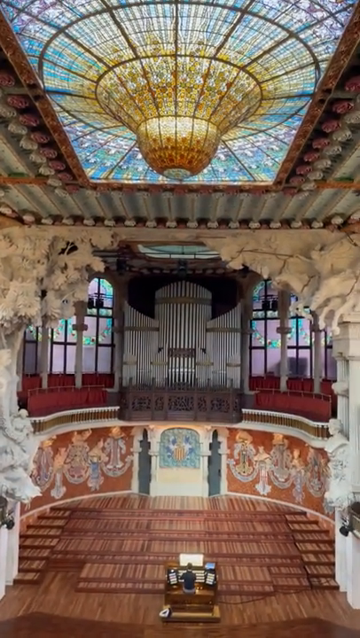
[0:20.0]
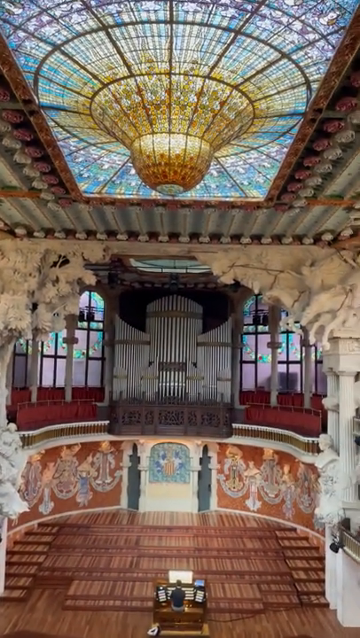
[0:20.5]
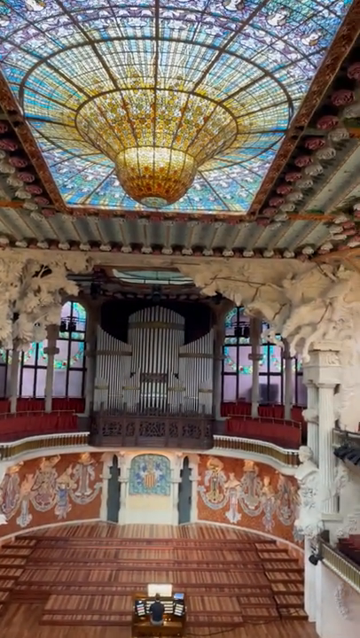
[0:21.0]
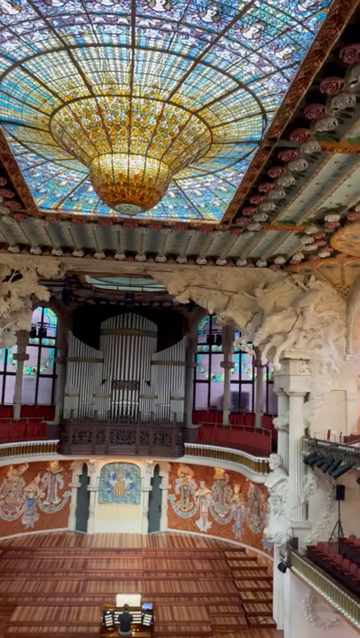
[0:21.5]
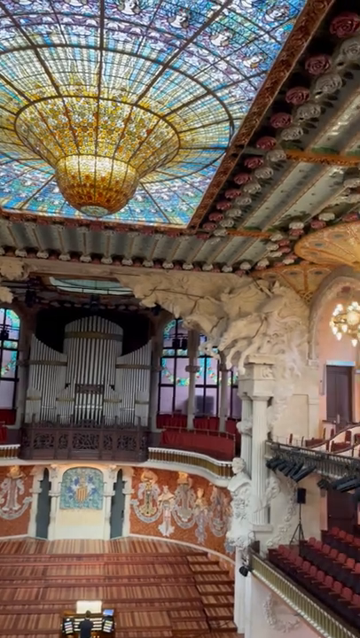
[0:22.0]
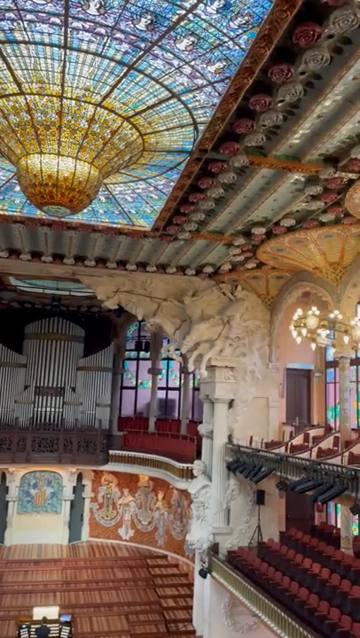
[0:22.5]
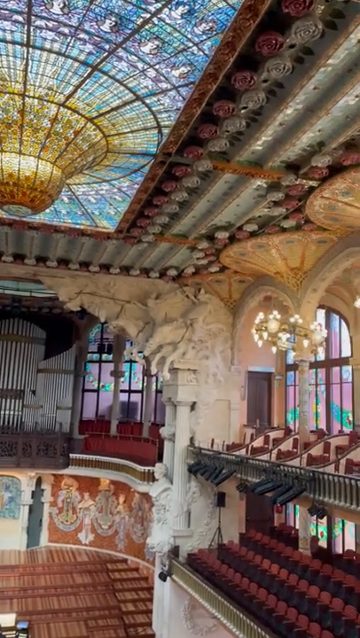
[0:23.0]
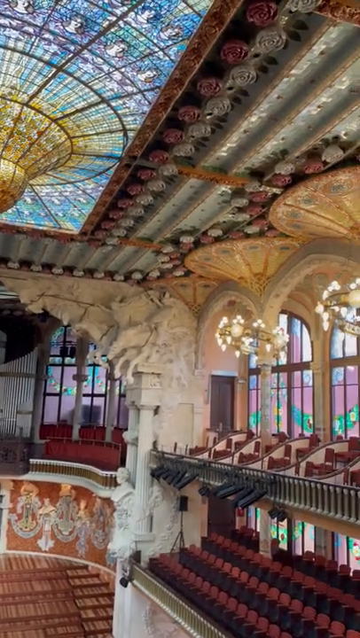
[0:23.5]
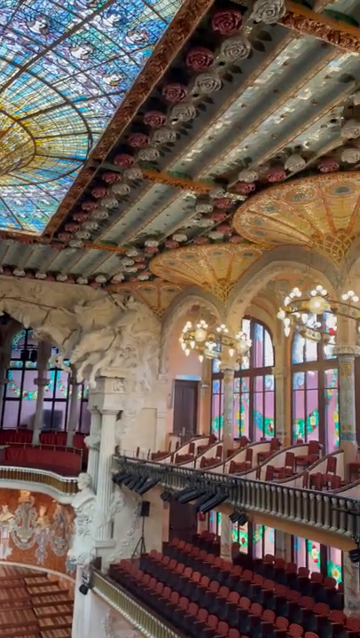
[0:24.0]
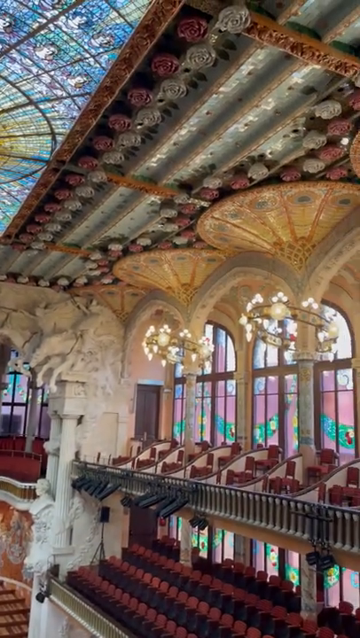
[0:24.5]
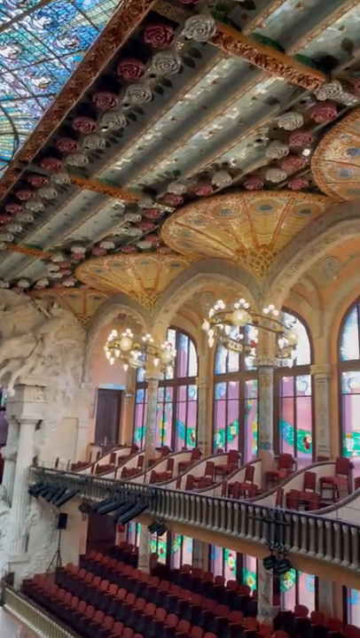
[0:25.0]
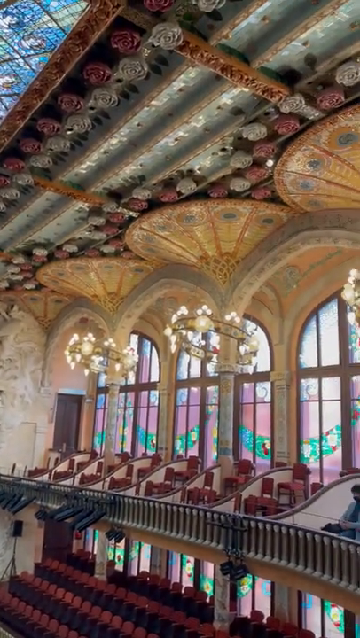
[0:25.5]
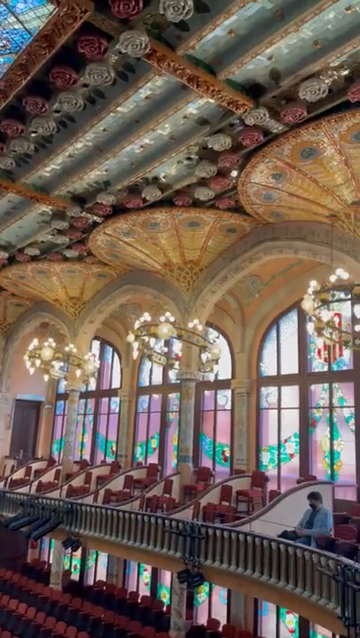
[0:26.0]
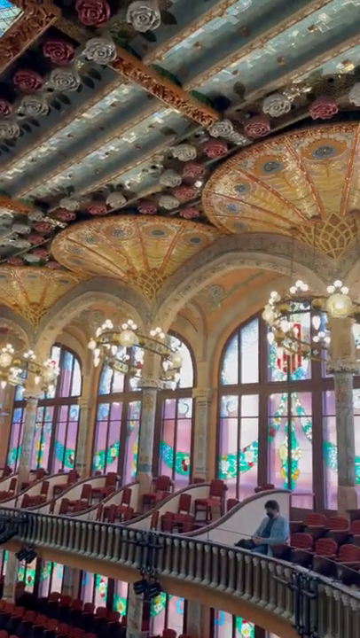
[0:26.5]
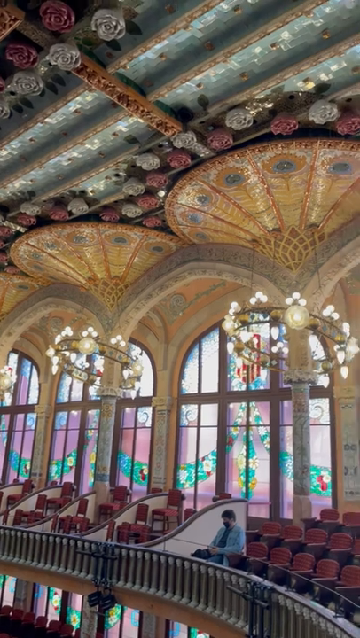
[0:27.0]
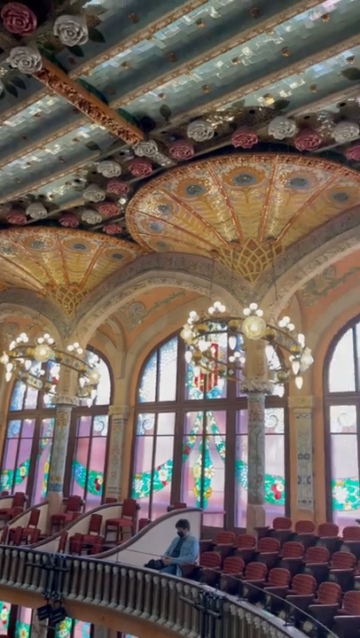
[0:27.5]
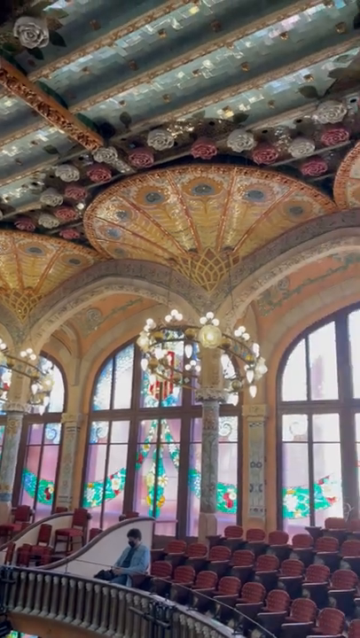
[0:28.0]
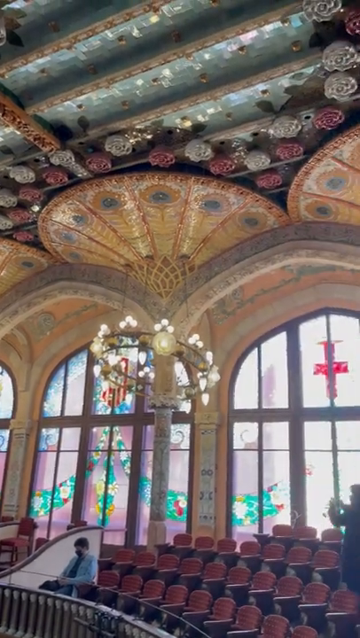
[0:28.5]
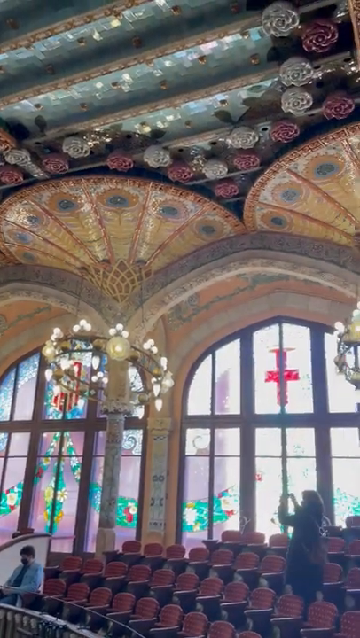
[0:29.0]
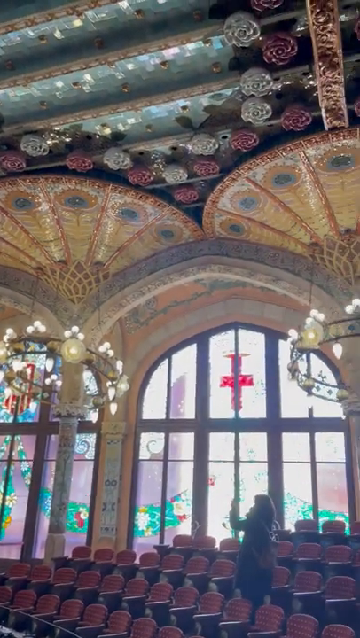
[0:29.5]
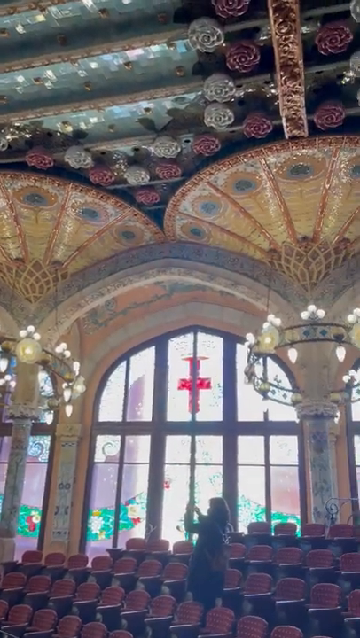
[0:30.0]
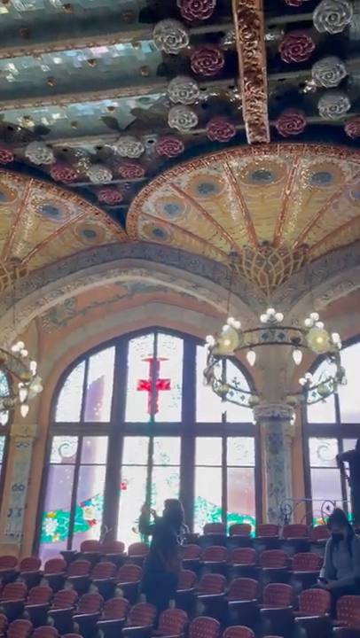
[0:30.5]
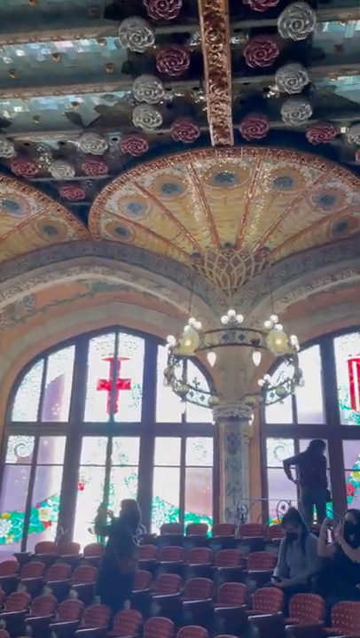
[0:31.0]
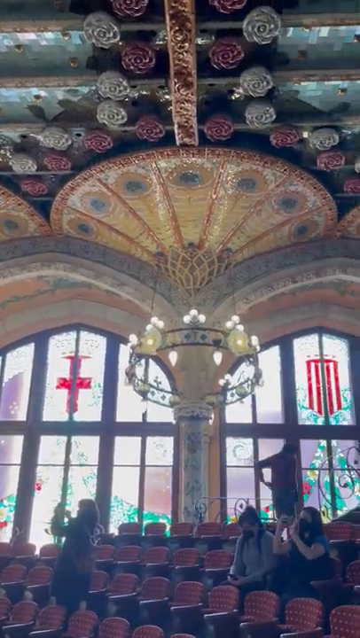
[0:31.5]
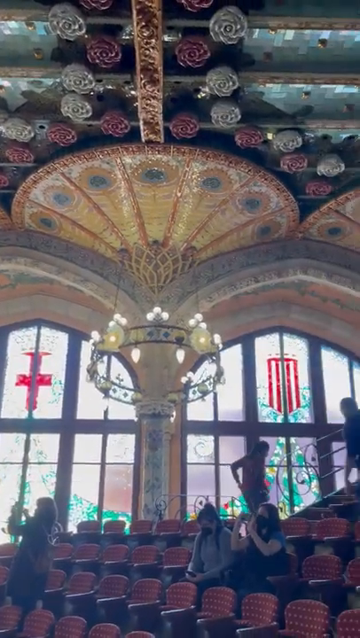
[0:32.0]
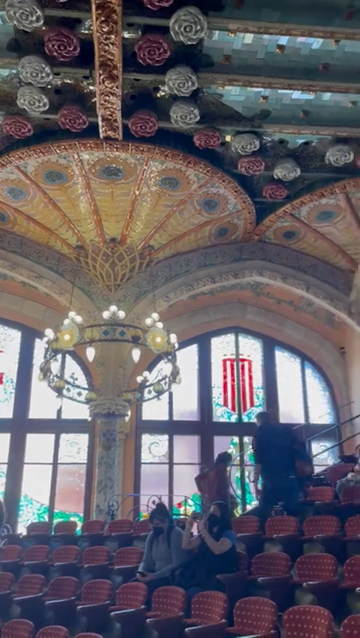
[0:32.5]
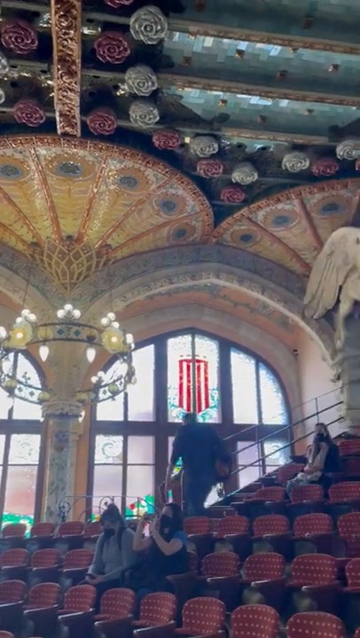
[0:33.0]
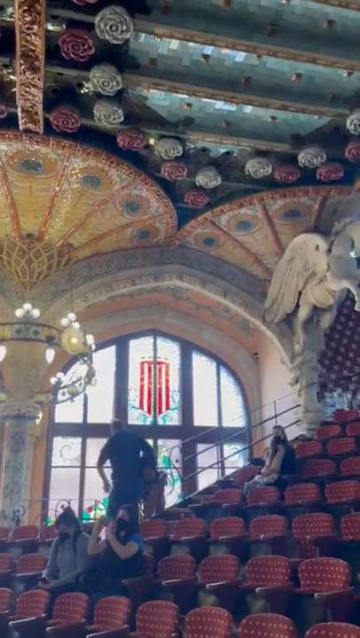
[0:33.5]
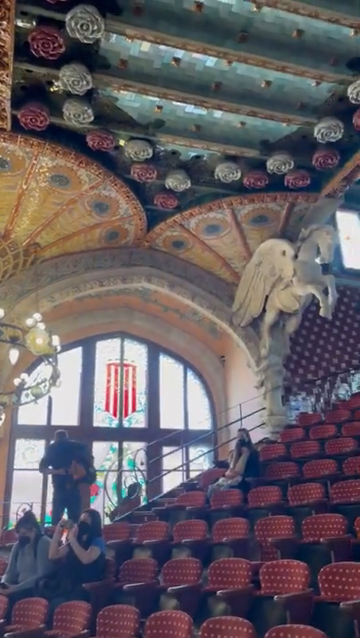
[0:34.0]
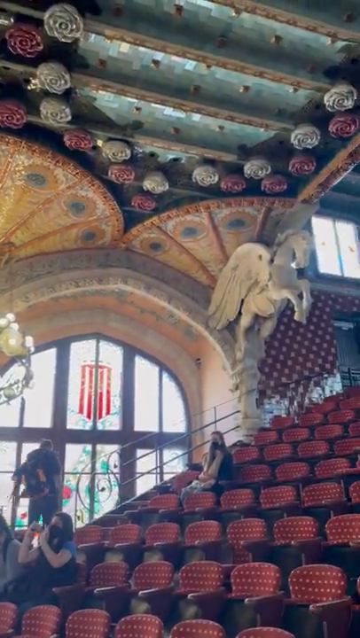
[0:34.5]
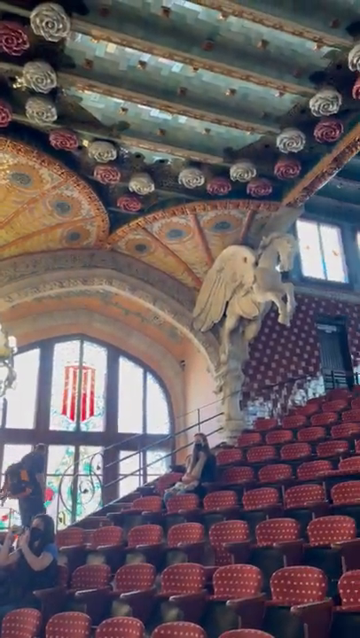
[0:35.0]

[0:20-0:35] The camera pans to the right, showing the second and third levels. The second level has a row of red velvet seats, and on the third level each section has about five or six red chairs that are not side by side but very close to each other. Chandeliers hang from the ceiling, and there are very high flying buttresses. There are many very colorful stained-glass windows, which are very tall and arched. People are on the red seats: a woman with a bag takes pictures of the stained-glass windows, while others sit on the seats. Two women sit side by side, taking pictures of the interior of the church. A staircase leads up to an even higher level, and two people are going to the staircase. What looks like a horse statue floats over the red seats. Everybody wears a face mask, so the video was apparently taken during COVID. The center of the church has ornate designs, with lots of carvings on top of the columns as well as murals, but the floor section where the altar is supposed to be is empty.